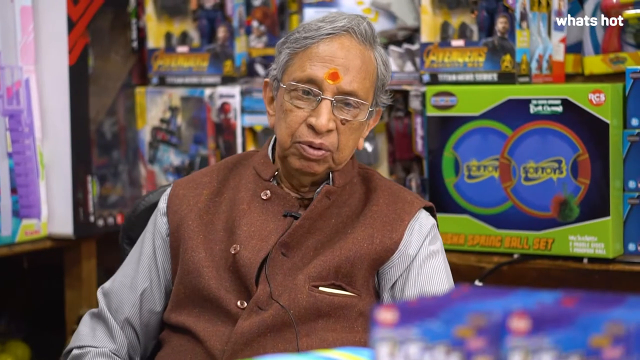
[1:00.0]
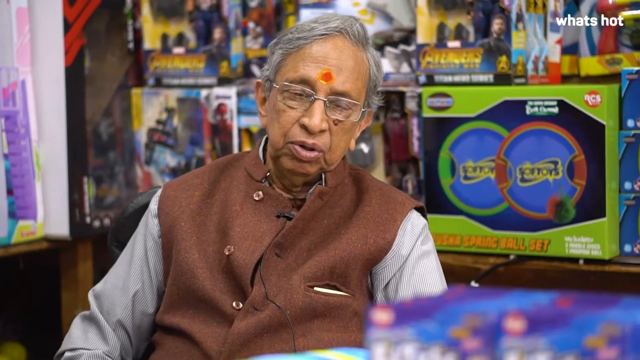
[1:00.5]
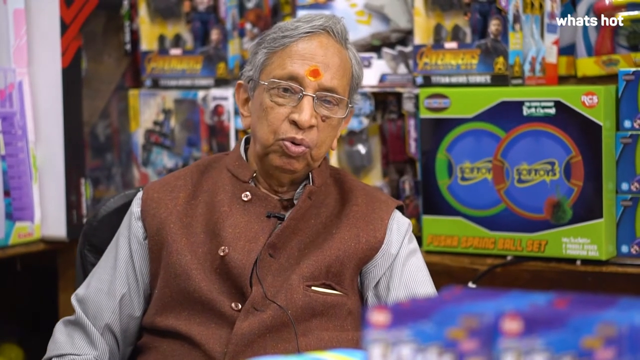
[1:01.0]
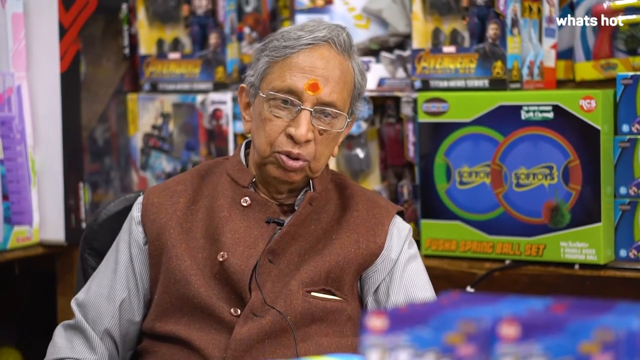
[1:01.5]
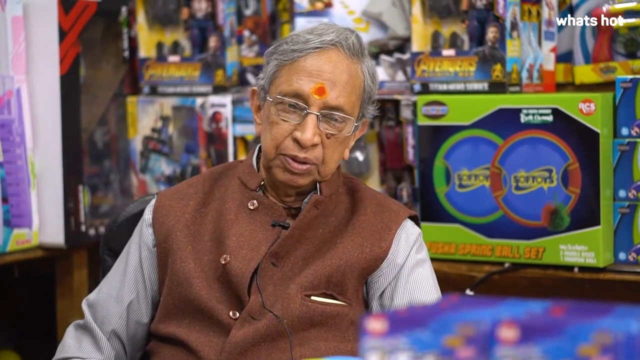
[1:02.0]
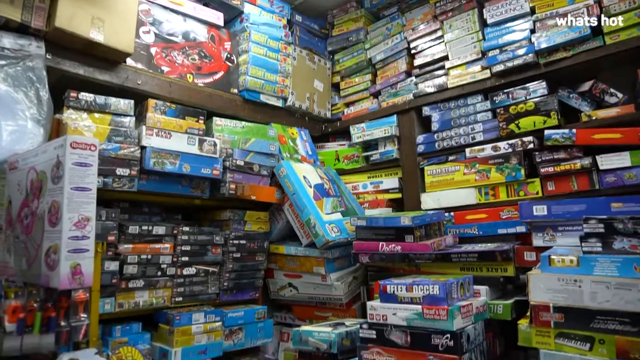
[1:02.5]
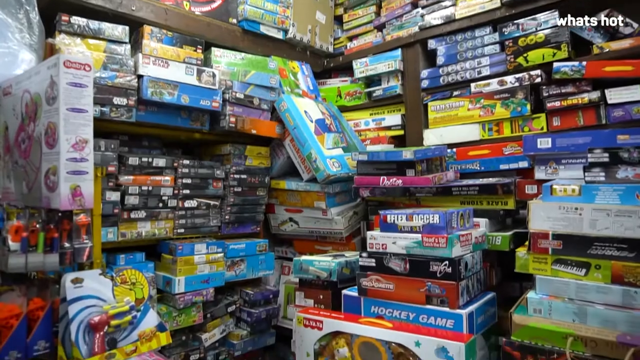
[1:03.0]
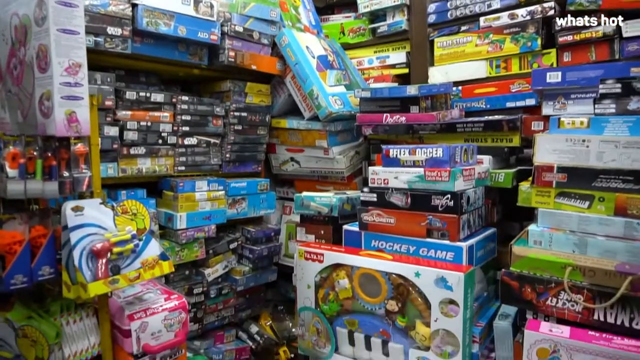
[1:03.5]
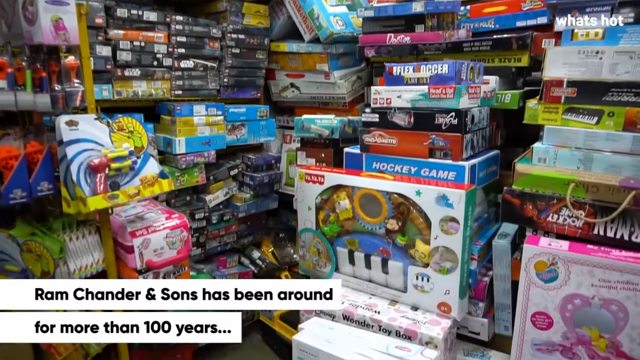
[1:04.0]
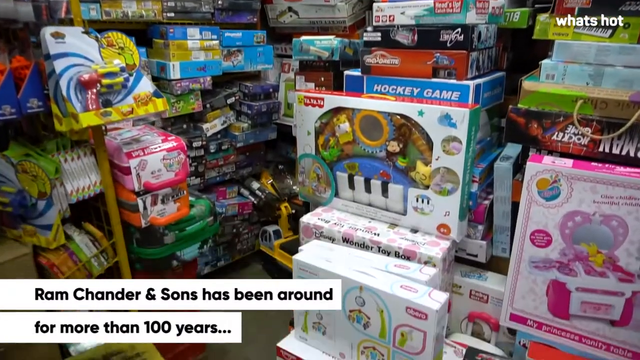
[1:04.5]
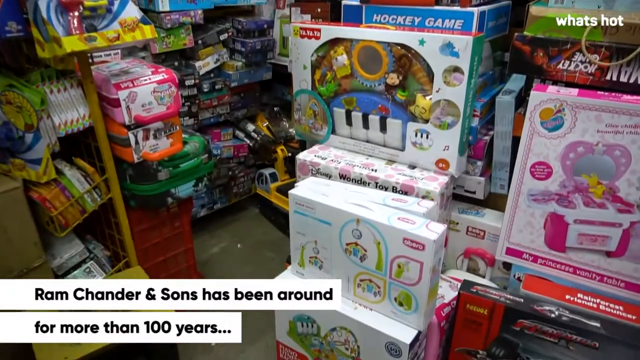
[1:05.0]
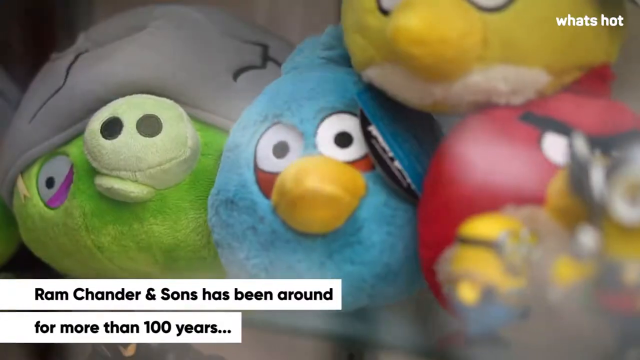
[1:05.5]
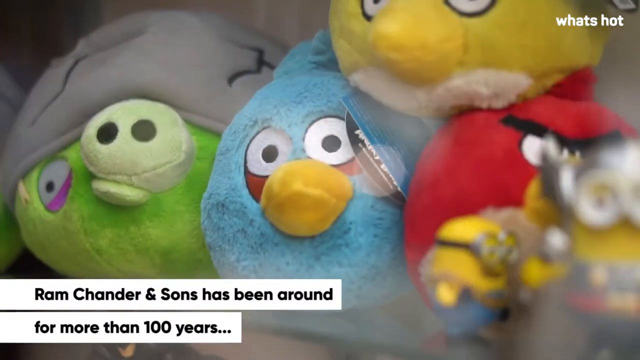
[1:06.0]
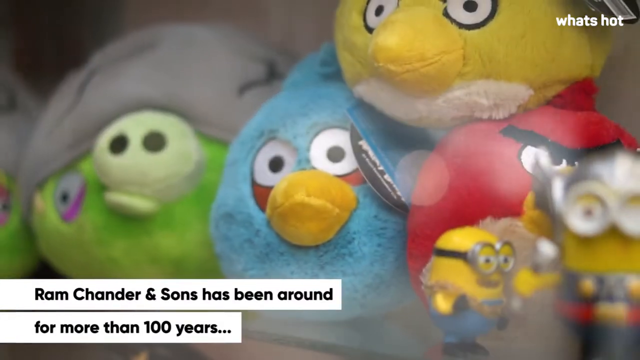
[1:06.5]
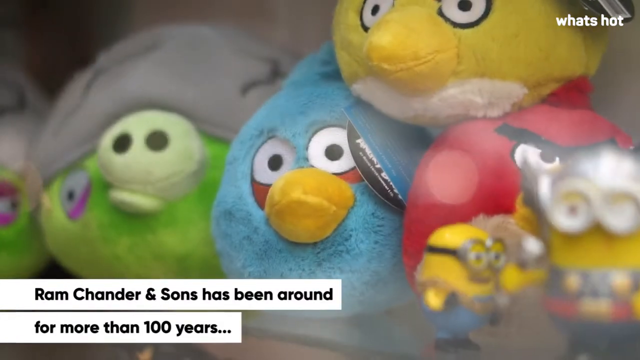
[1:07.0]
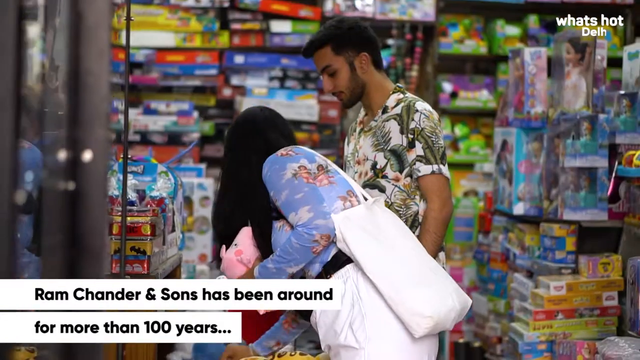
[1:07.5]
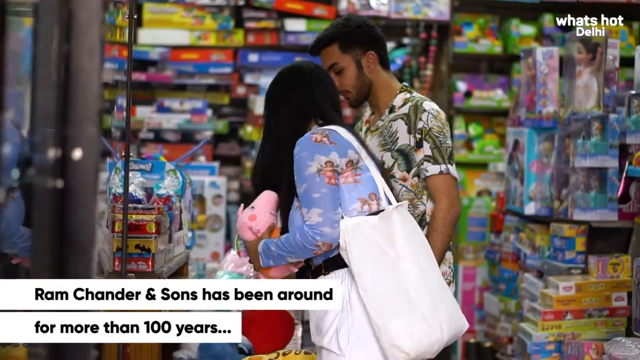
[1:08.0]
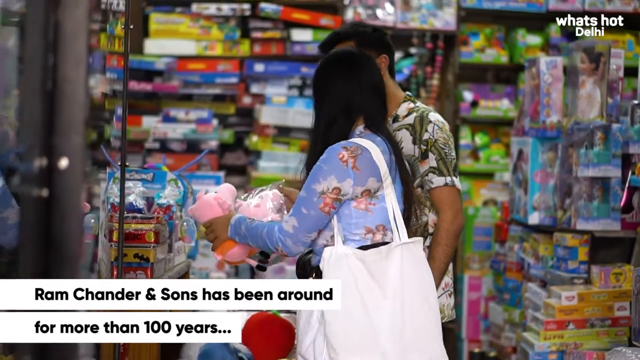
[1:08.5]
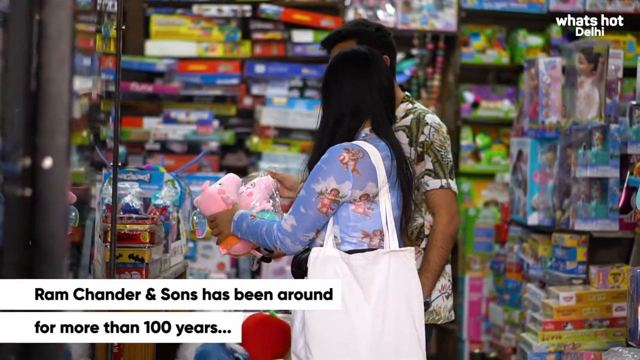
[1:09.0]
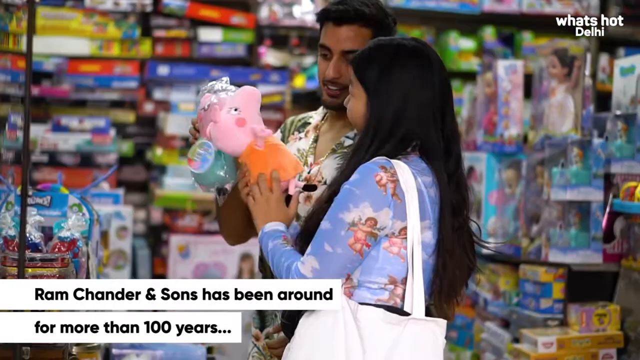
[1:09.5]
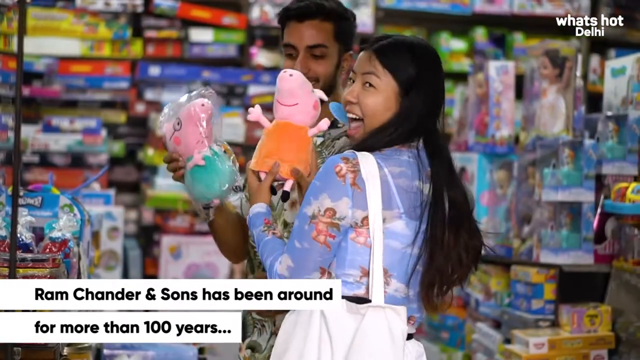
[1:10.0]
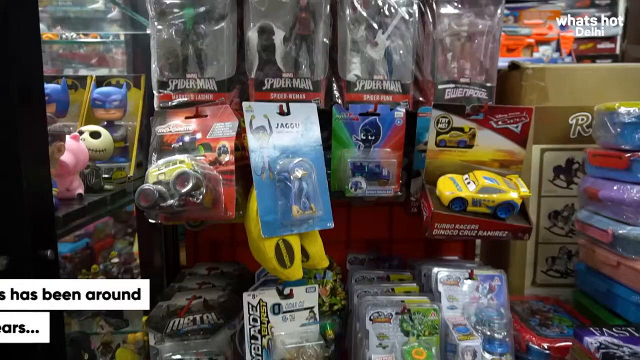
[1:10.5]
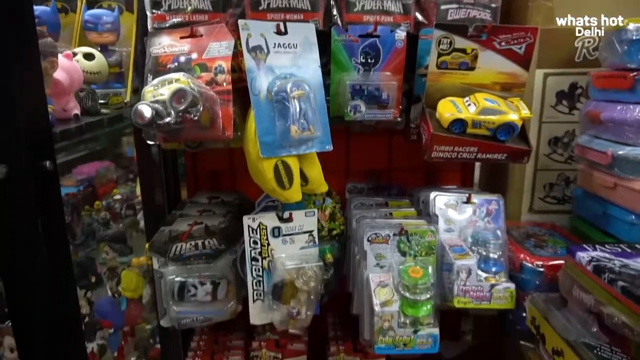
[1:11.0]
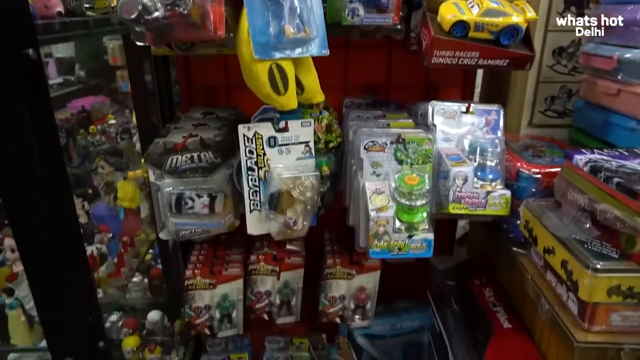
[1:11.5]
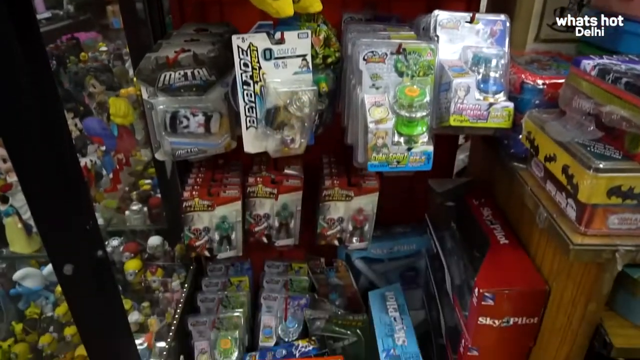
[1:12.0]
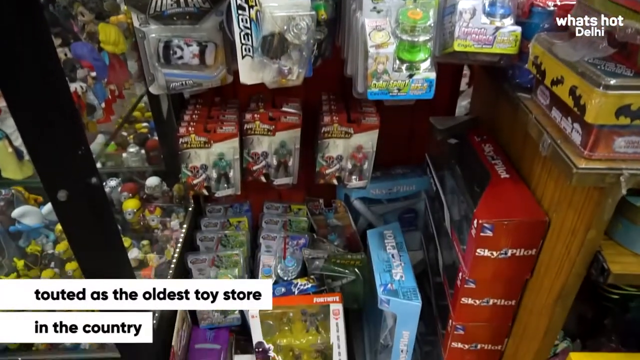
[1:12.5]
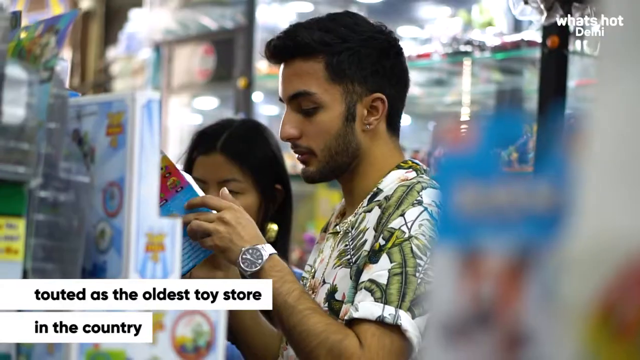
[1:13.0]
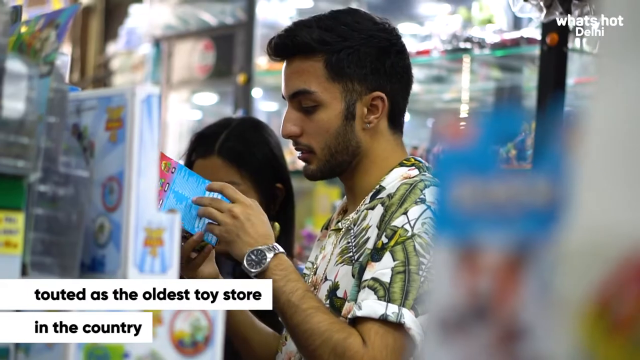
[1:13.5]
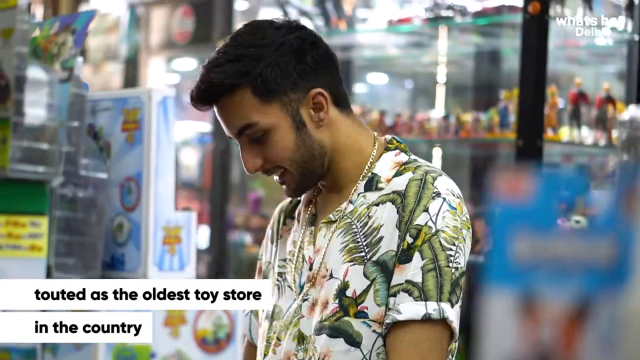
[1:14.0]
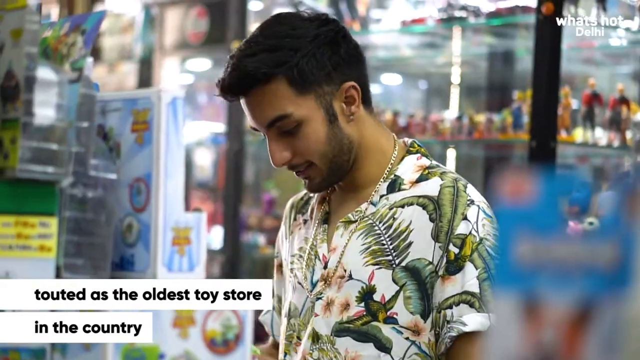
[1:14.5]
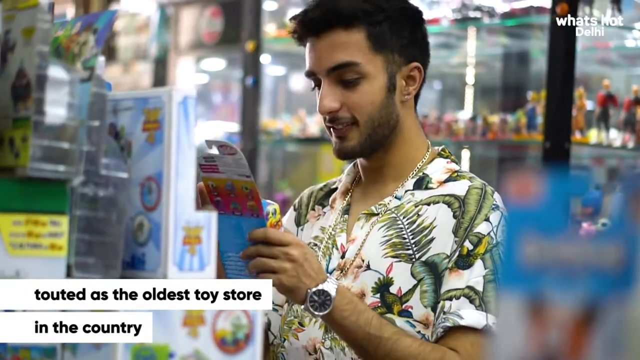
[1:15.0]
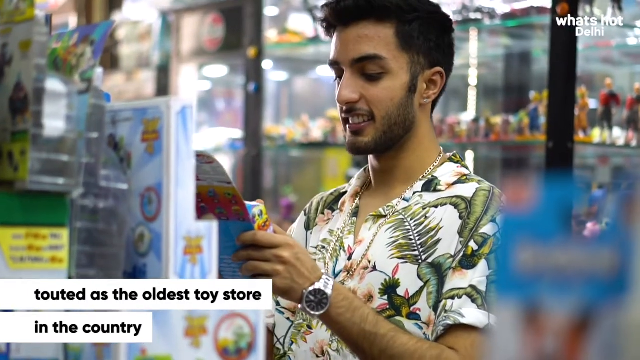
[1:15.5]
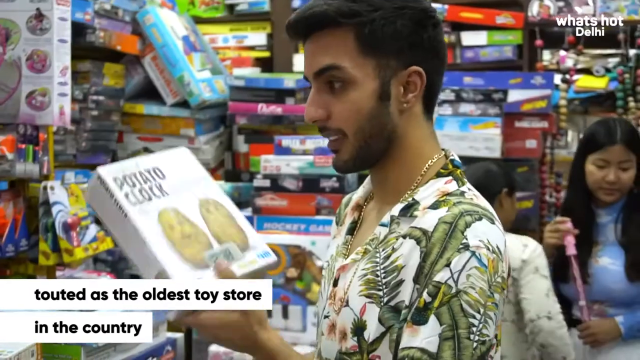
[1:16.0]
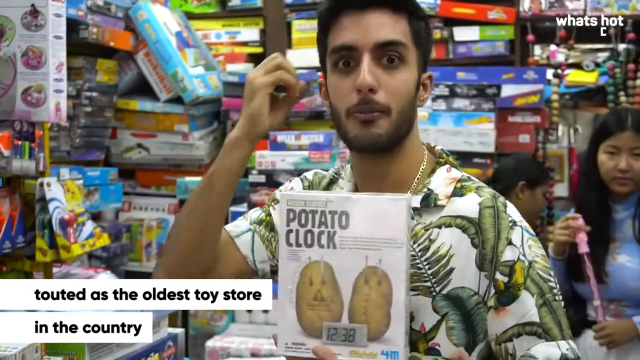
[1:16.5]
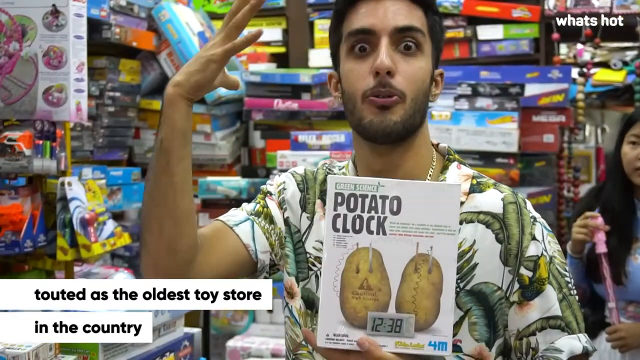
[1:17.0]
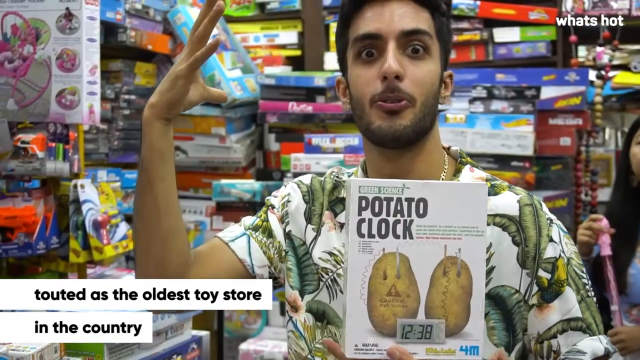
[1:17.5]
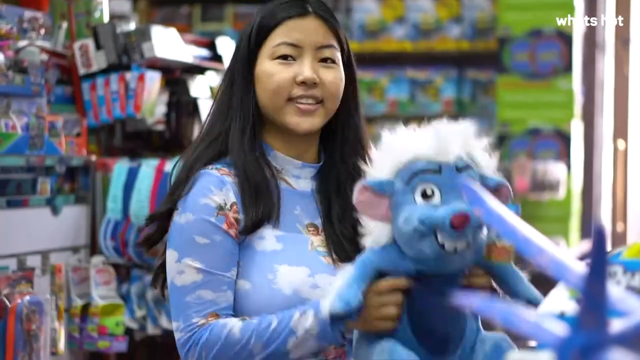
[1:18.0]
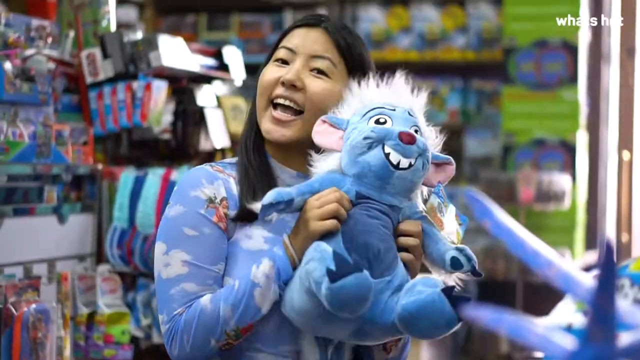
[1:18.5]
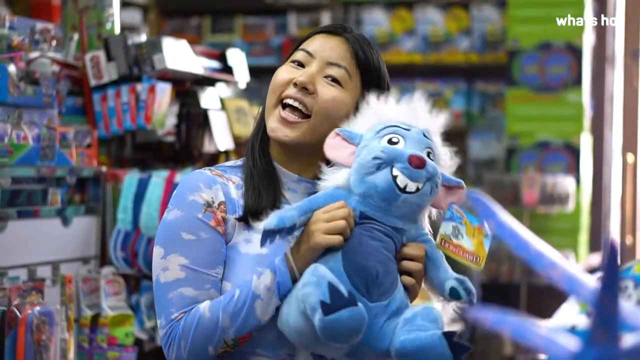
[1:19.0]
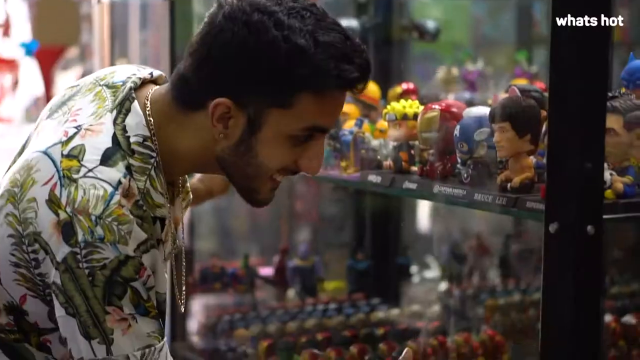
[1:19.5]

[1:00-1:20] They look to the camera and show off dozens of toys, shopping around for toys in Ram Chander. Text at the bottom left says "Ram Chander and sons has been around for more than a hundred years", and text at the bottom left also describes it as "the oldest toy store in the country".